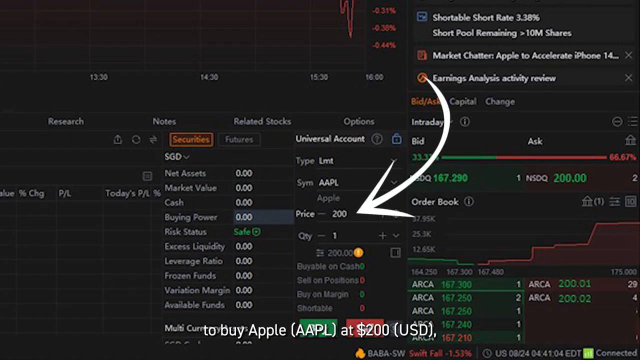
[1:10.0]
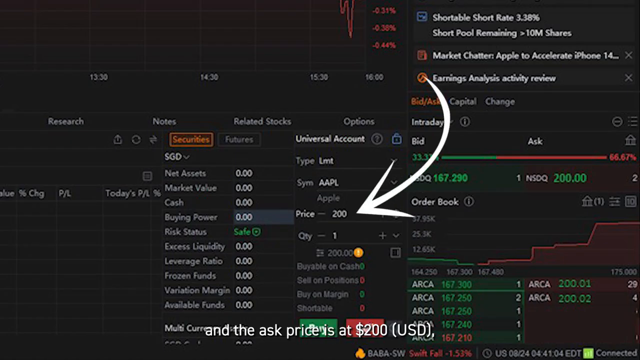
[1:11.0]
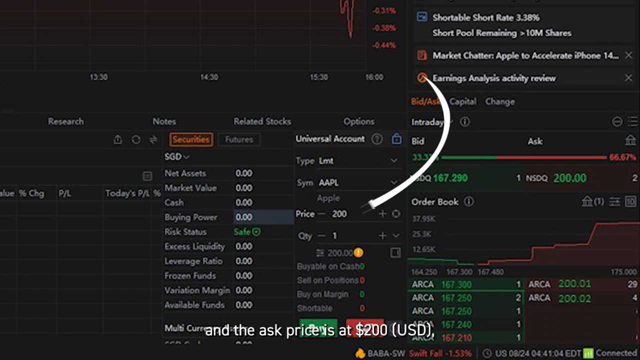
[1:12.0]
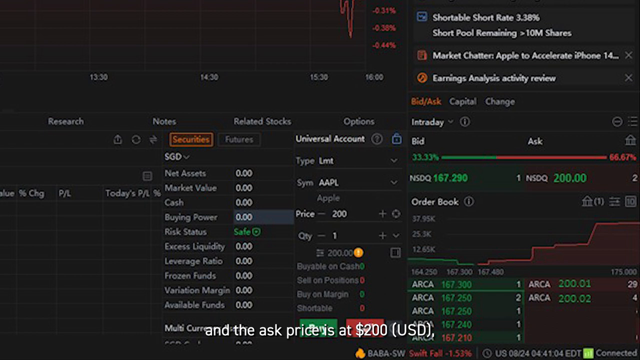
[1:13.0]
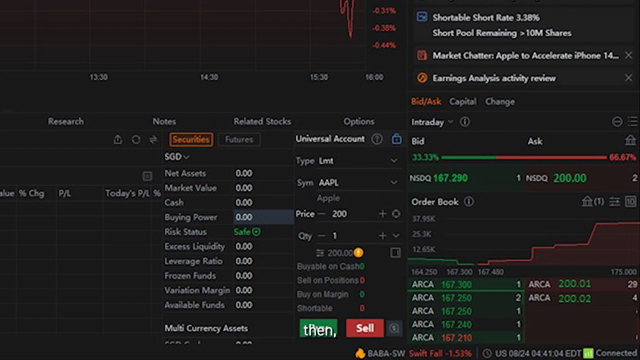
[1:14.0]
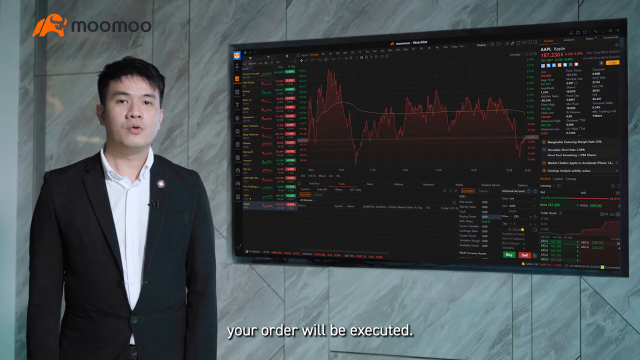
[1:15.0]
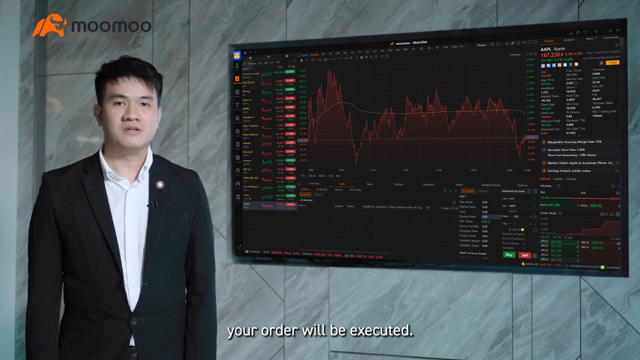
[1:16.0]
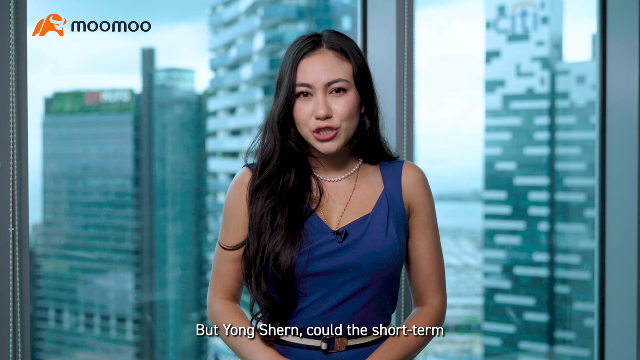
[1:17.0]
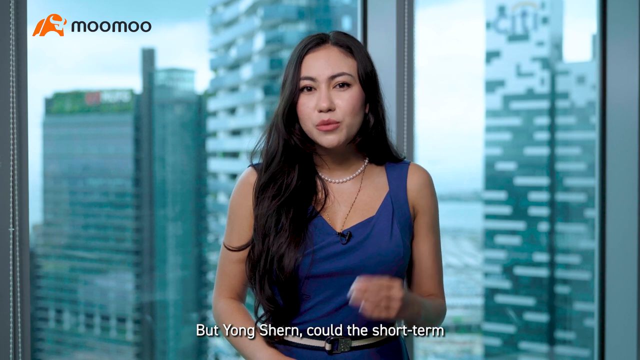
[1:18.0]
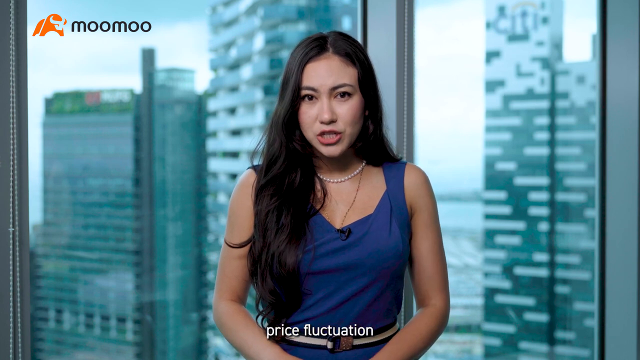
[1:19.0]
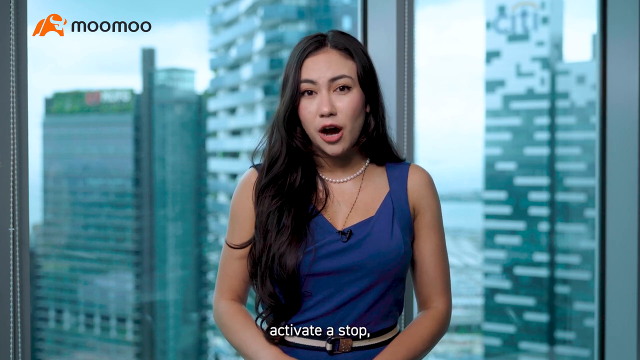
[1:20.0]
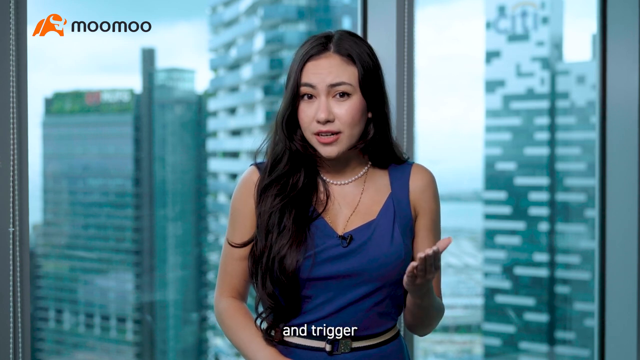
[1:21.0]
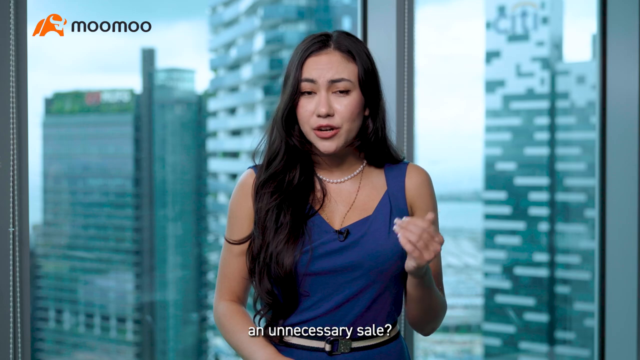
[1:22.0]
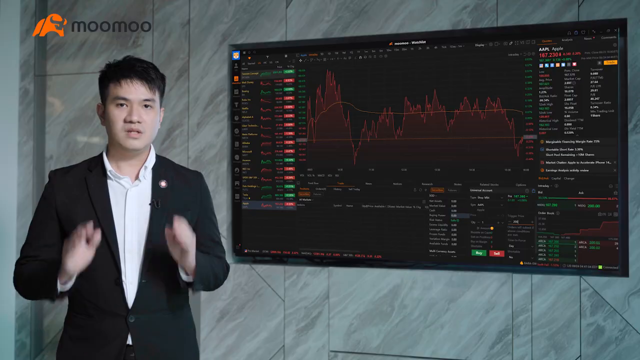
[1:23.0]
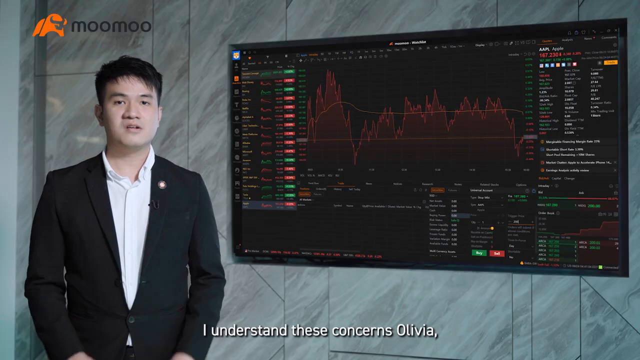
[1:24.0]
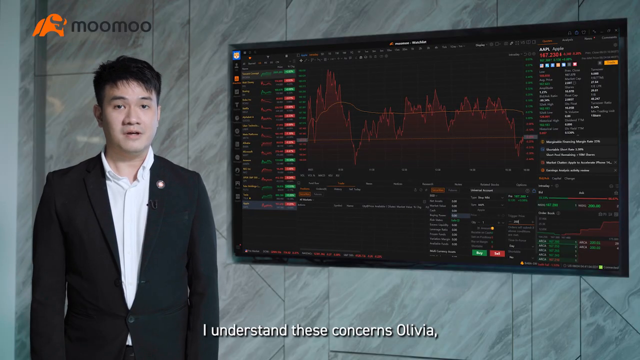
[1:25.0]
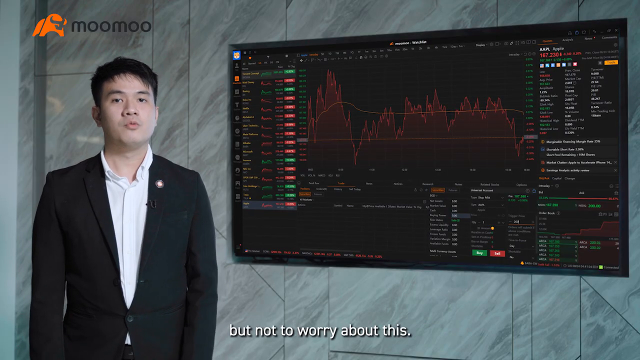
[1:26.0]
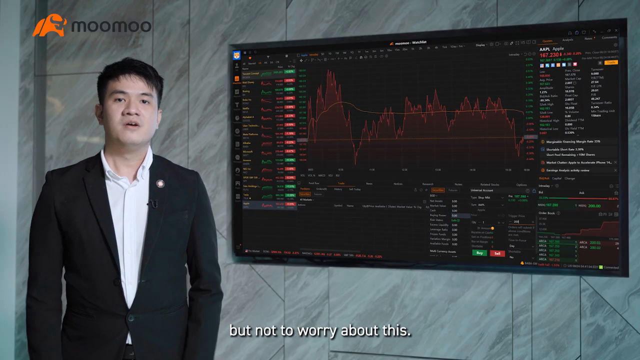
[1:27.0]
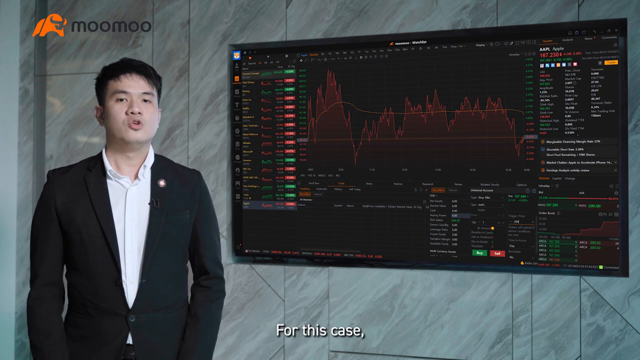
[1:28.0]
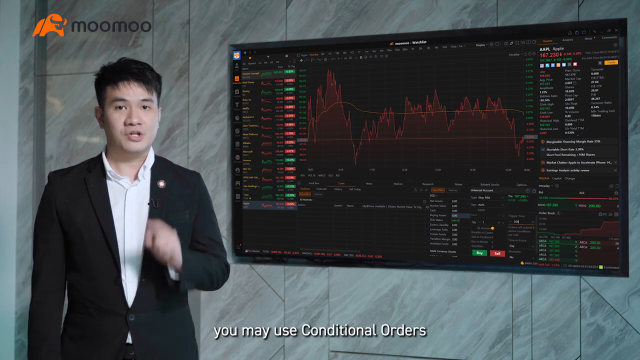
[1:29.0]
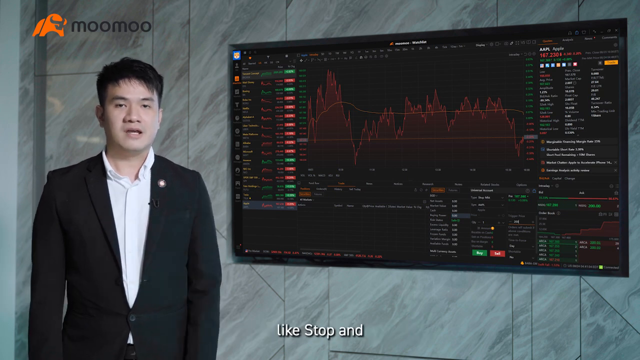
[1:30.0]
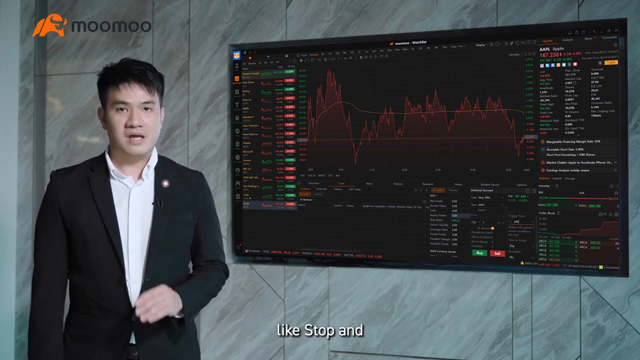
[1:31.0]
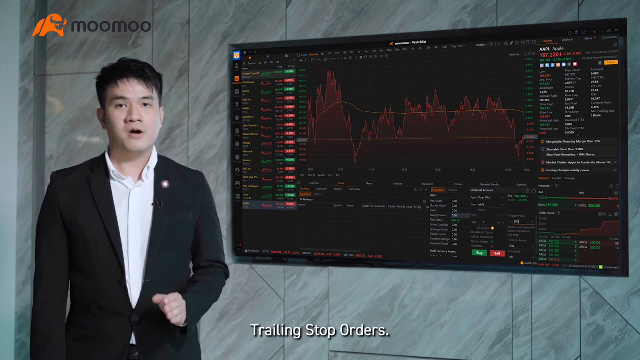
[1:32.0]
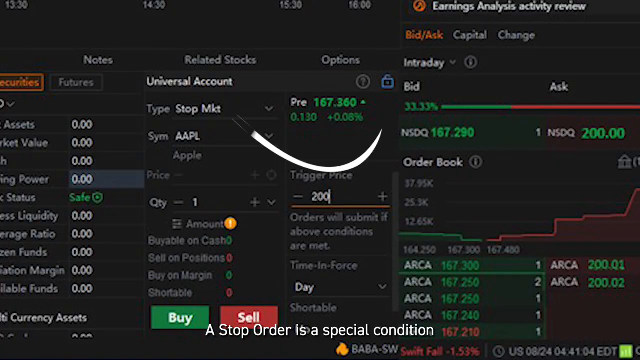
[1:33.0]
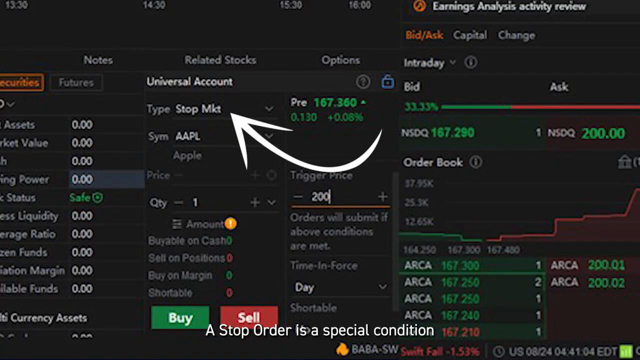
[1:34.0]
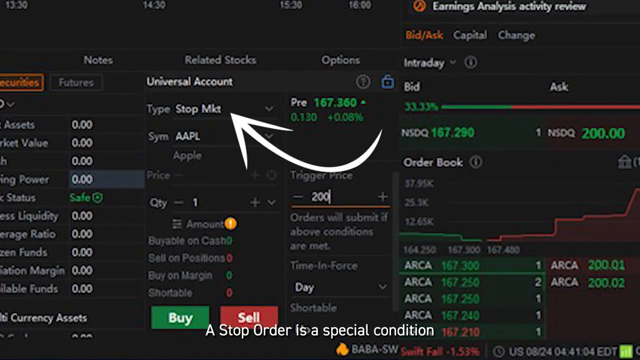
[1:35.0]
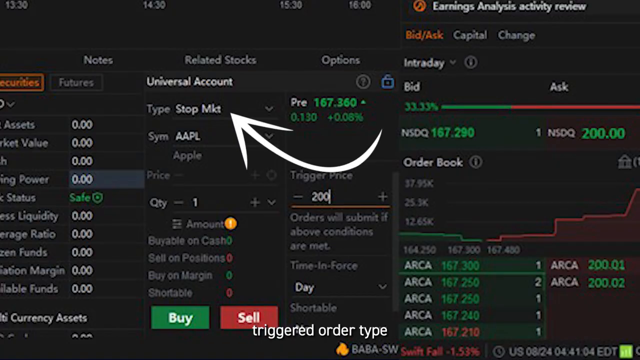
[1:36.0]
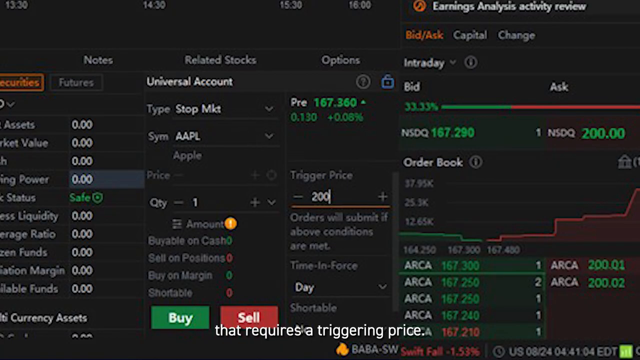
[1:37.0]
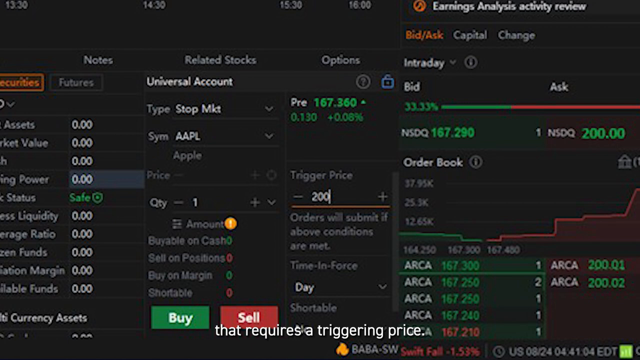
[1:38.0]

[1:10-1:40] Lee explains how to execute an order. The video then returns to the news anchor Olivia in the blue dress, who asks him how to activate or trigger a stop, along with other questions. Back on Lee, the view zooms in on the screen again, where a white arrow points to "price." Olivia raises further concerns, such as whether it could activate a sale, and Lee continues to answer as the view zooms in on the screen and an arrow points to "stop market."